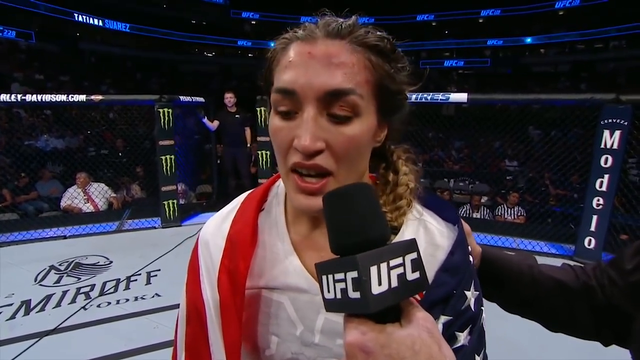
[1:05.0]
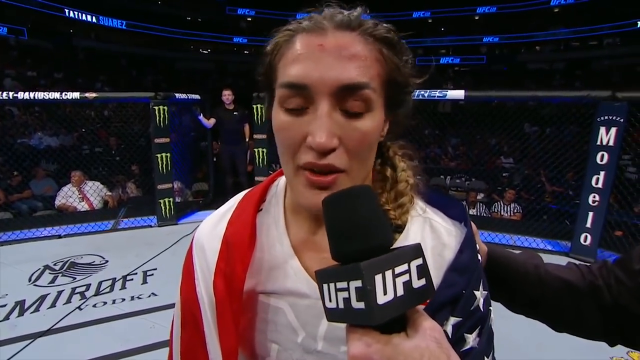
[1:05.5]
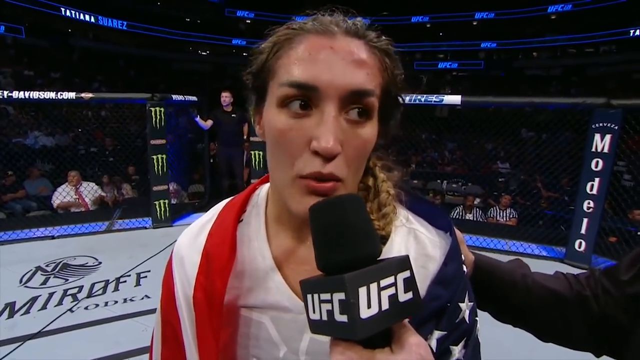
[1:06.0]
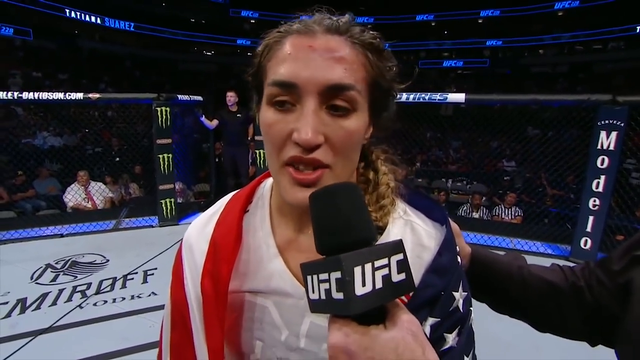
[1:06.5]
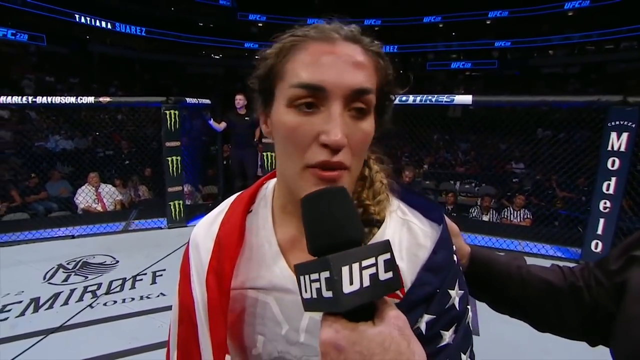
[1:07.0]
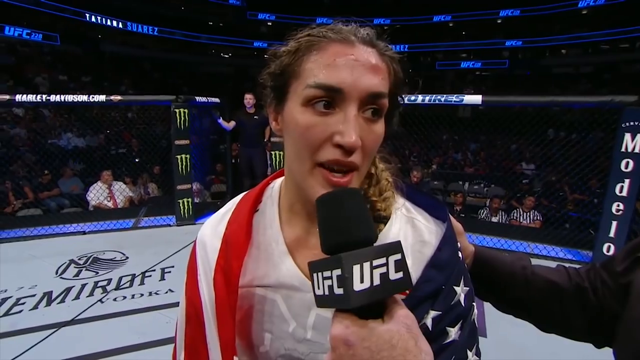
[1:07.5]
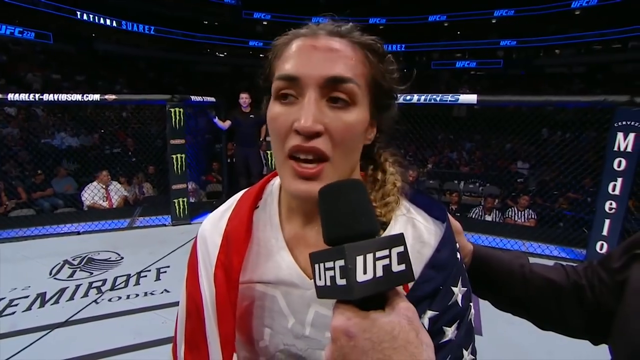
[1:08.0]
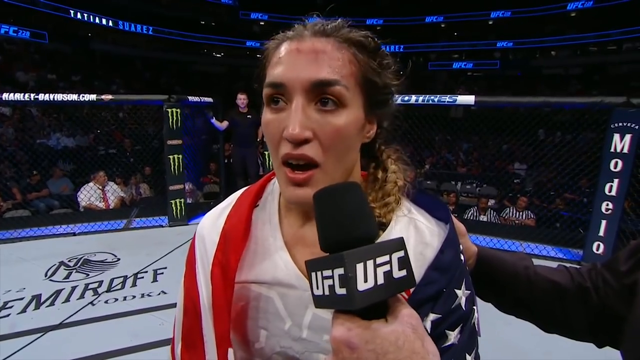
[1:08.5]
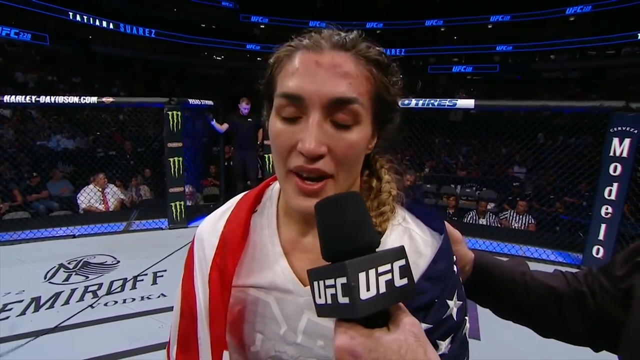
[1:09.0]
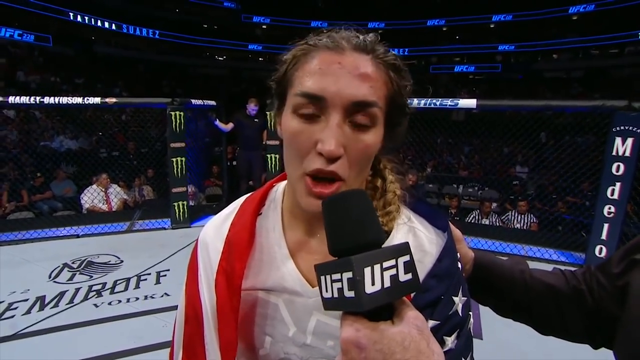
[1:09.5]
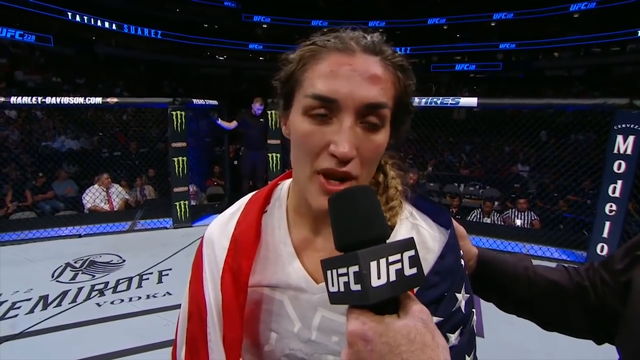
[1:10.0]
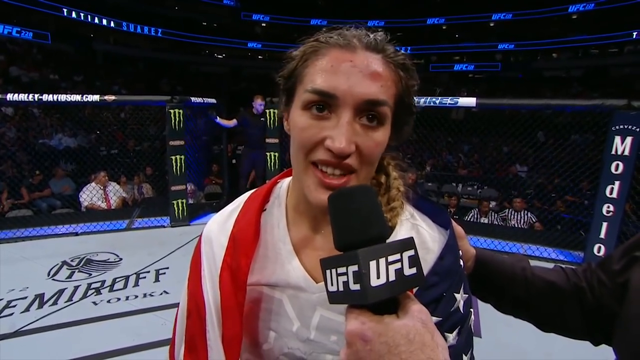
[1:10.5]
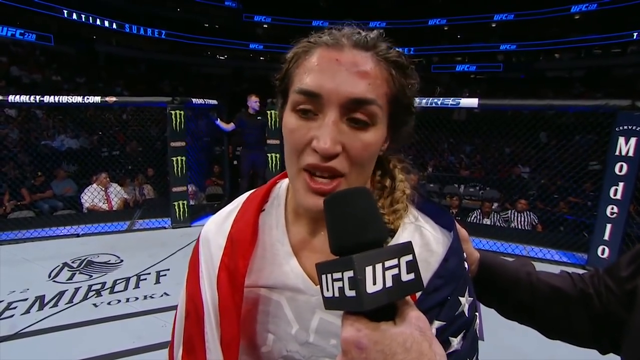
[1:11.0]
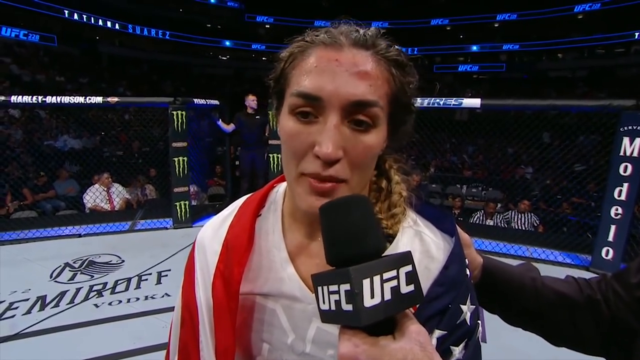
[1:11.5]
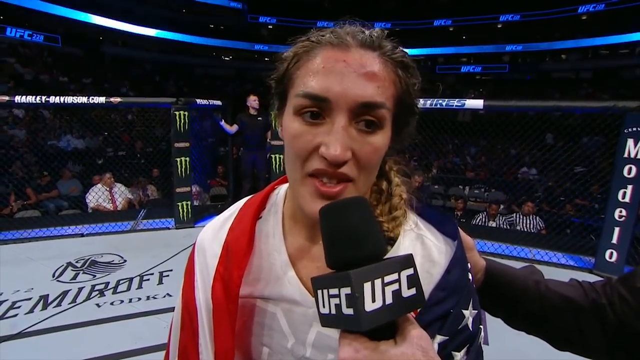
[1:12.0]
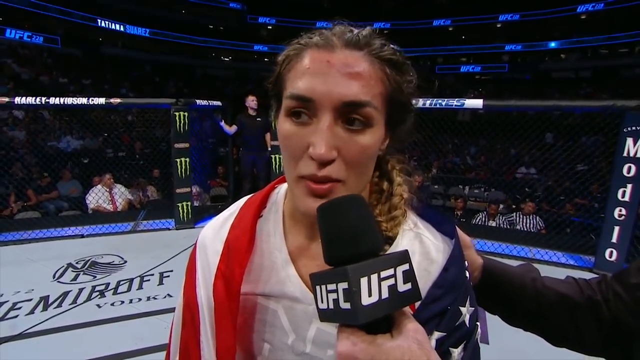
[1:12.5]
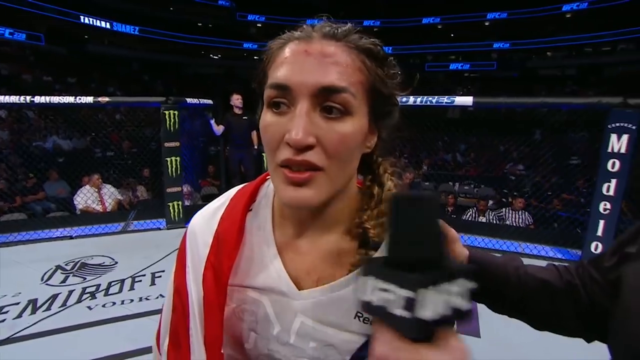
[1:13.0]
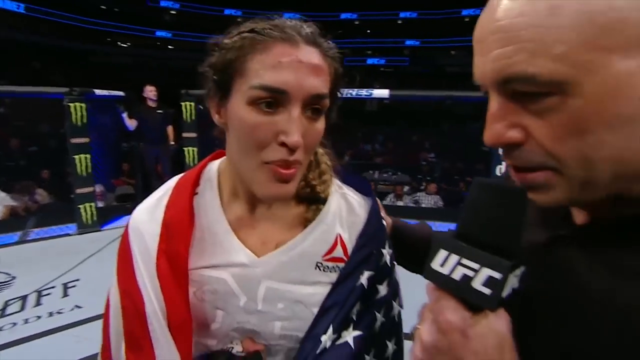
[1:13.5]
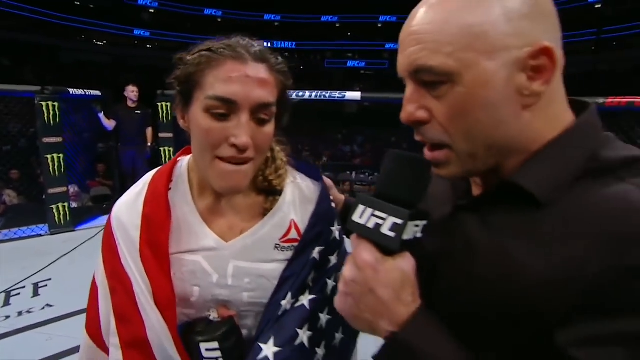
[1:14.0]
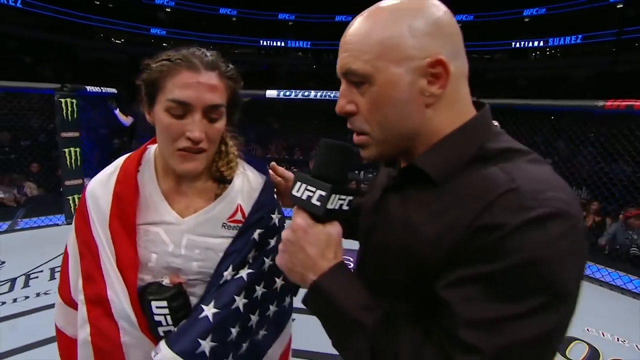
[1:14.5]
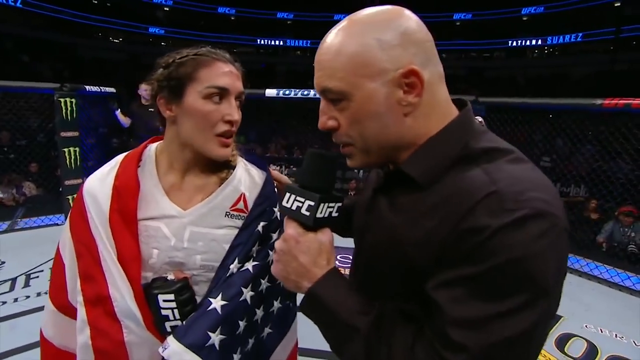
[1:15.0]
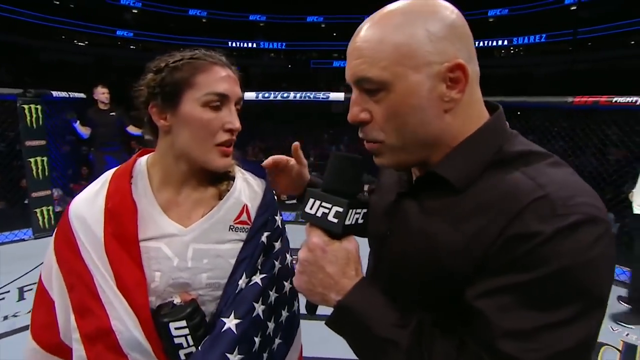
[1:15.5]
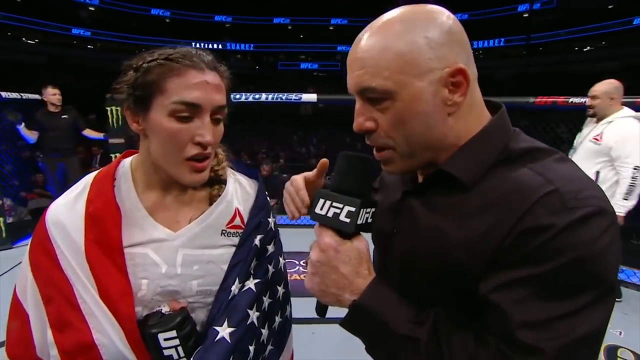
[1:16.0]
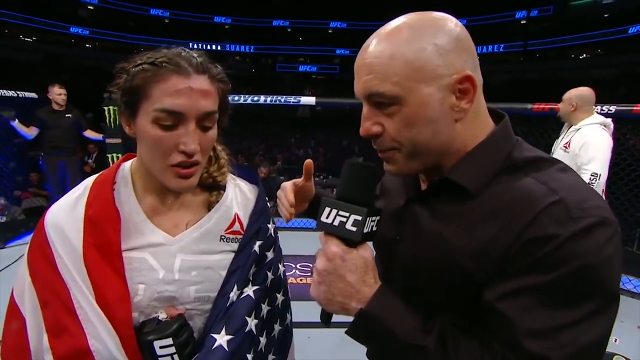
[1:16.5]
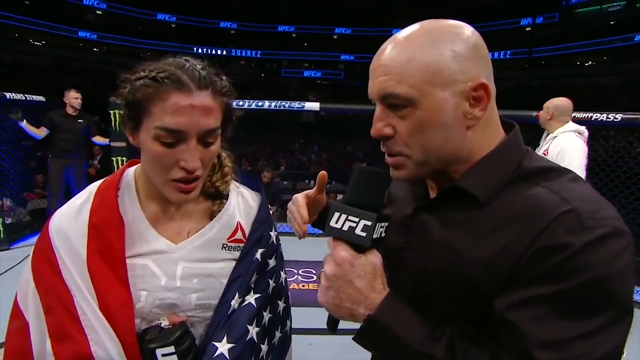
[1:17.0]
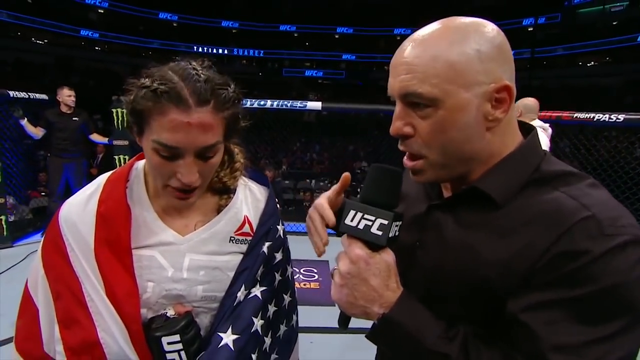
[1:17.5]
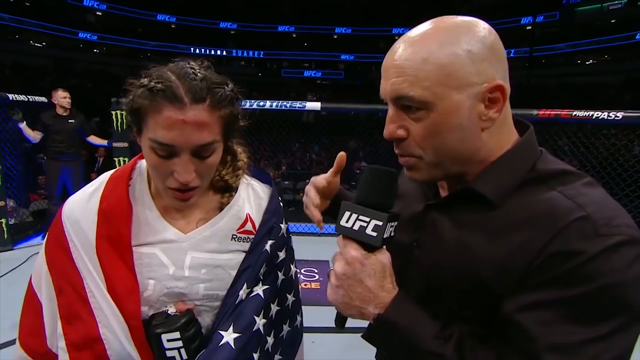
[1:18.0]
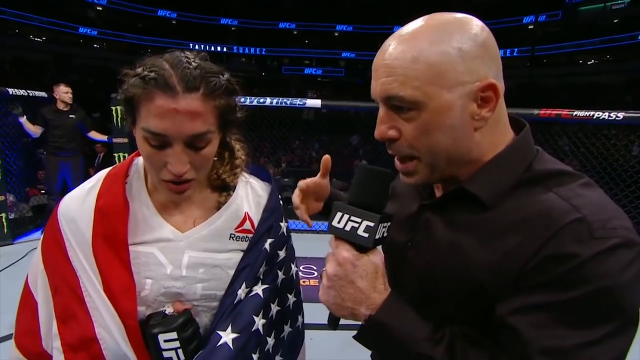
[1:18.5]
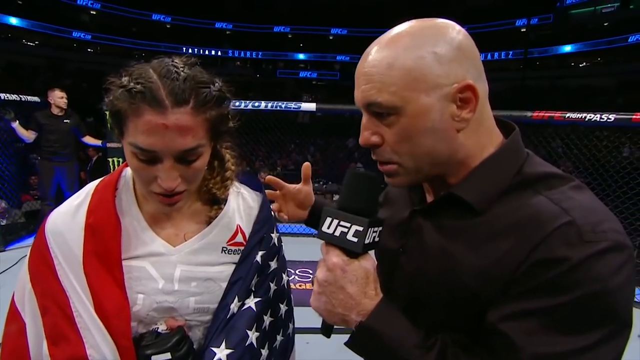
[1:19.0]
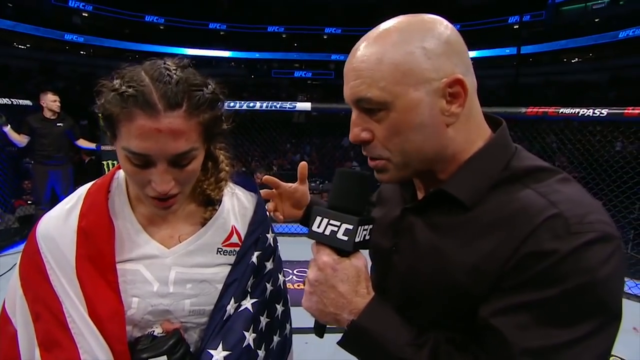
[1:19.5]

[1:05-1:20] The woman keeps talking with a black microphone up to her mouth that says "UFC" on both sides. The announcer, Joe Rogan, in a black button-up shirt and with a very shiny shaved head, gestures with his right hand as he talks, looking down at her and asking questions, and then rests his right hand on her left shoulder. Behind them, a bald man in a white hoodie walks past. At the very top of the arena, "Tatiana Suarez" is written in neon blue and white letters that shimmer. The ring is light blue with dark blue horizontal trim lines. "UFC fight pass" is written on the top right turnbuckle to the right of the announcer. The woman's hair, pulled back into a ponytail, is blondish at the ends.